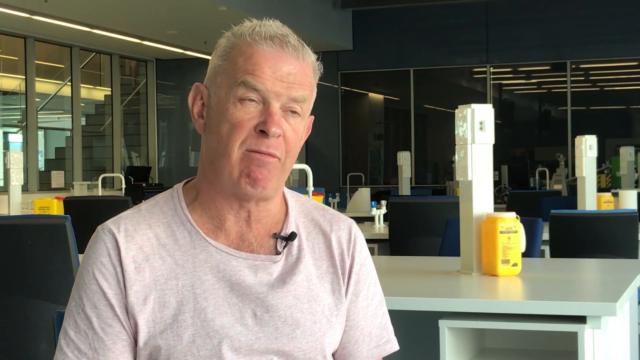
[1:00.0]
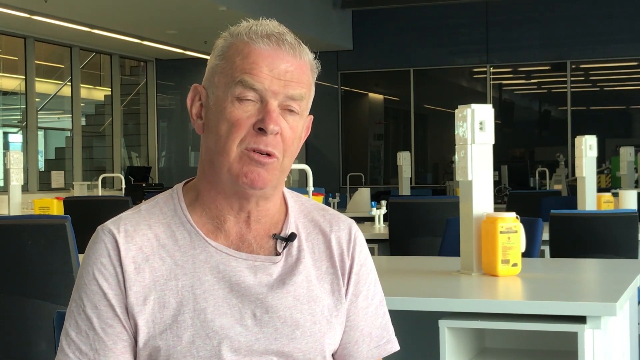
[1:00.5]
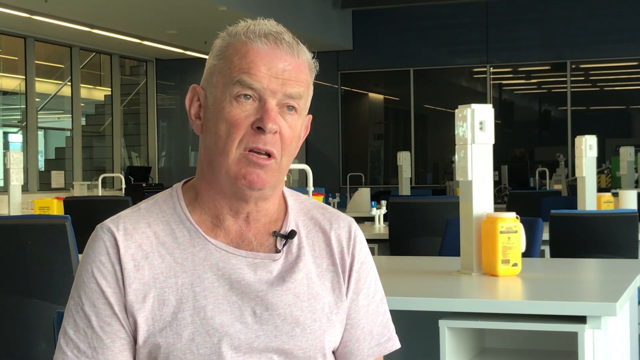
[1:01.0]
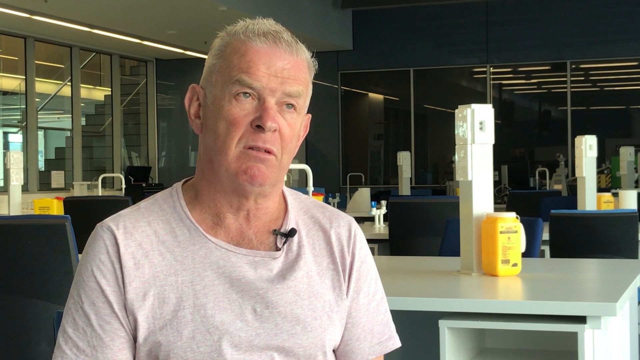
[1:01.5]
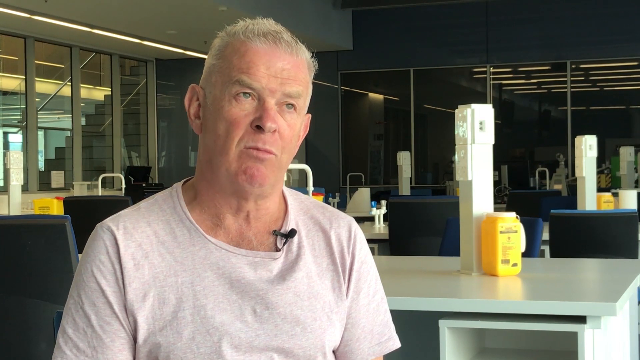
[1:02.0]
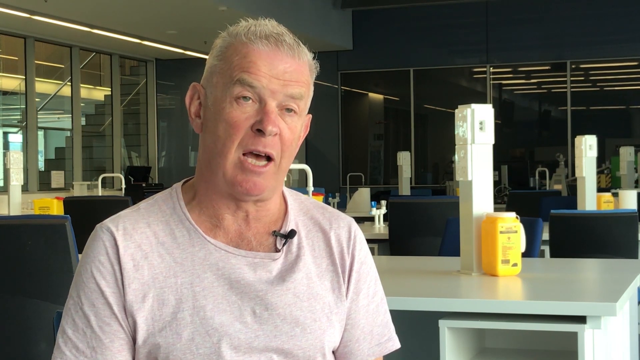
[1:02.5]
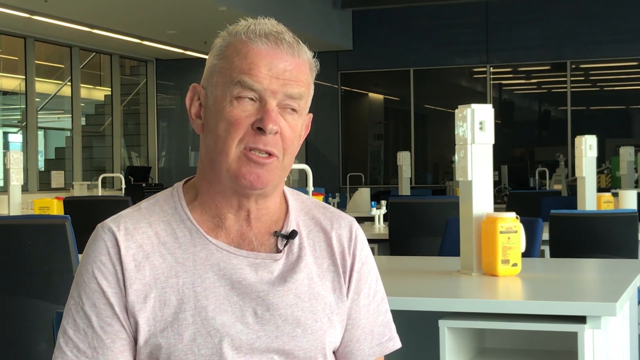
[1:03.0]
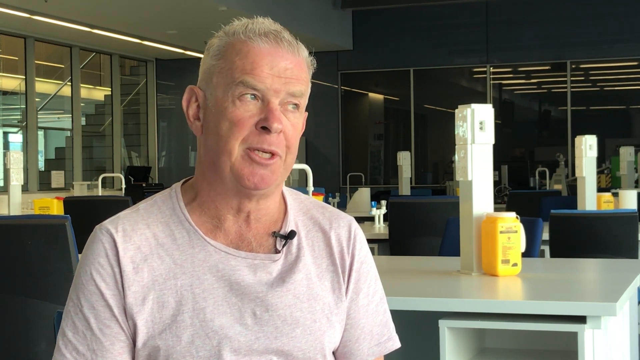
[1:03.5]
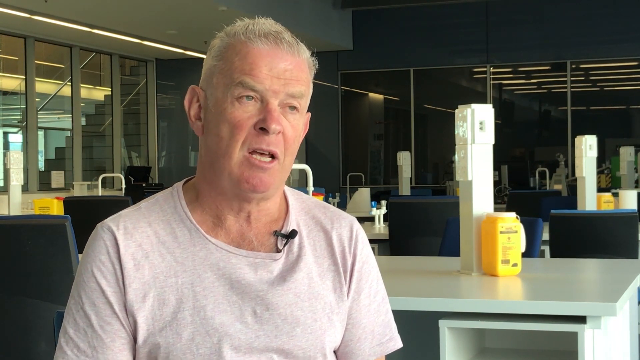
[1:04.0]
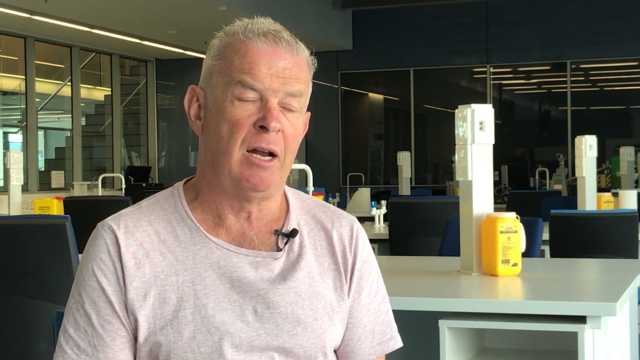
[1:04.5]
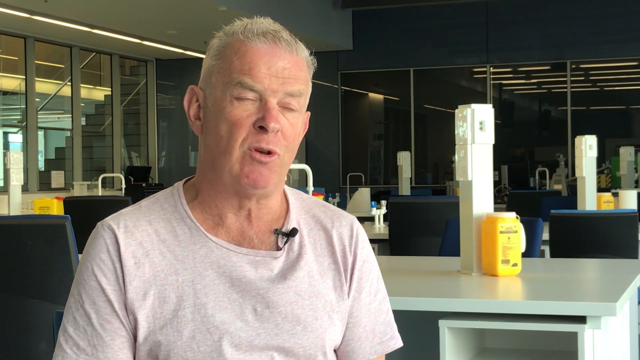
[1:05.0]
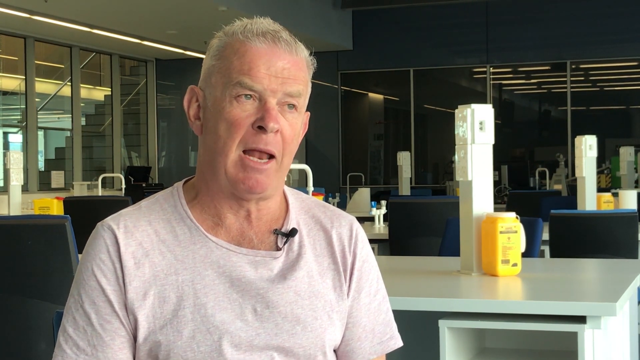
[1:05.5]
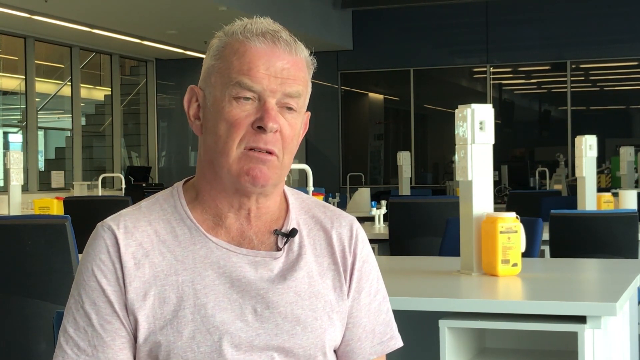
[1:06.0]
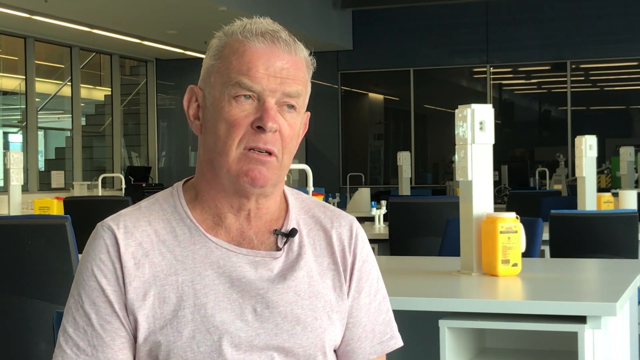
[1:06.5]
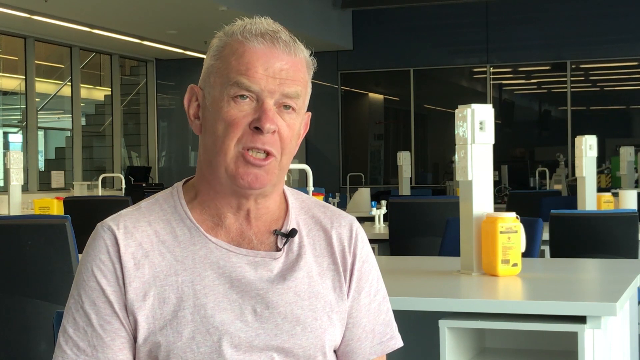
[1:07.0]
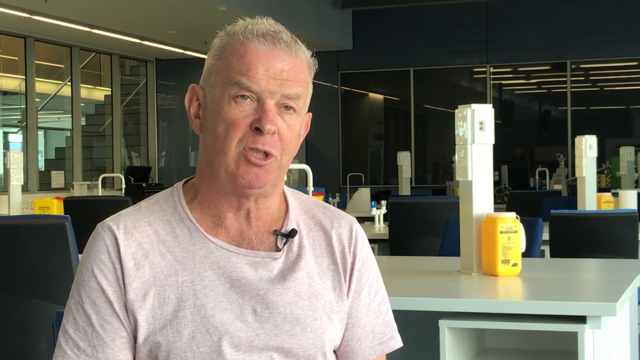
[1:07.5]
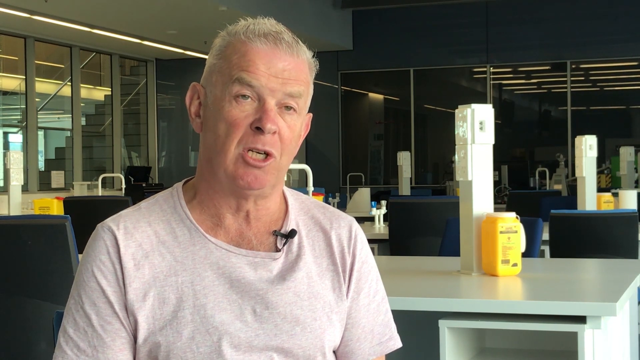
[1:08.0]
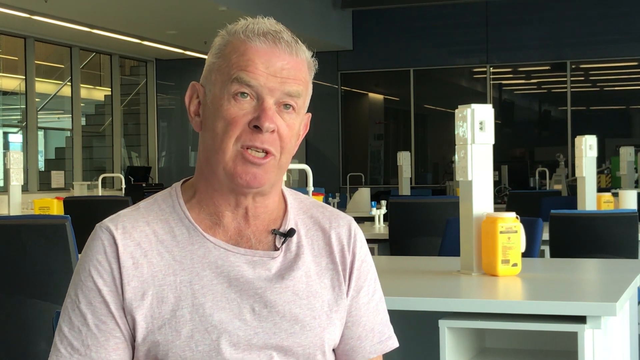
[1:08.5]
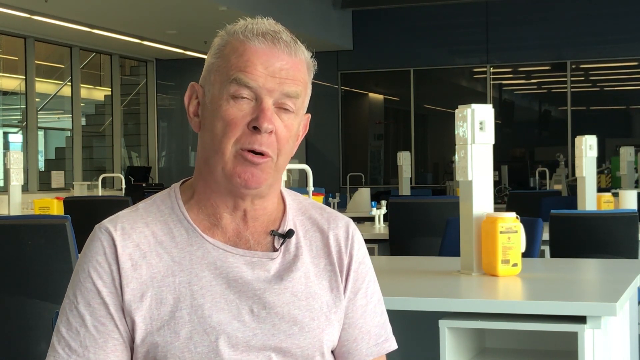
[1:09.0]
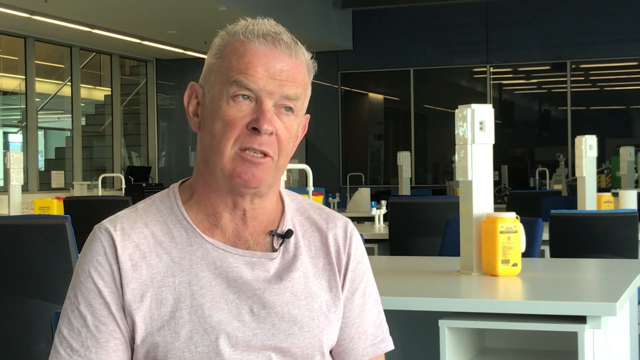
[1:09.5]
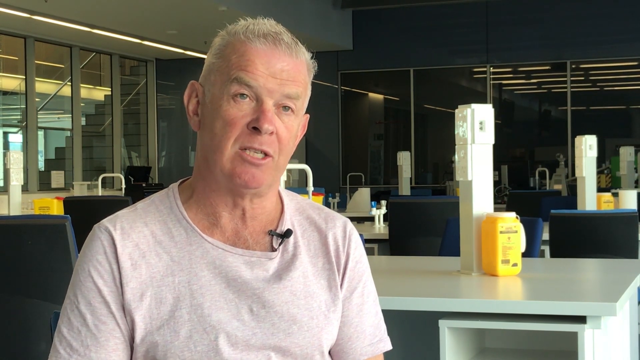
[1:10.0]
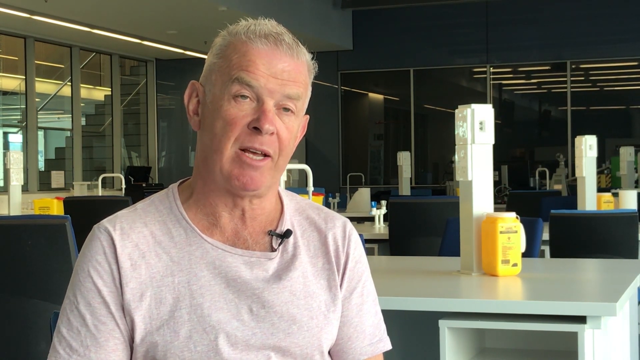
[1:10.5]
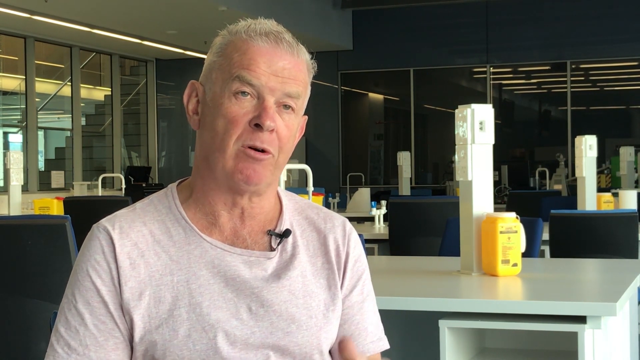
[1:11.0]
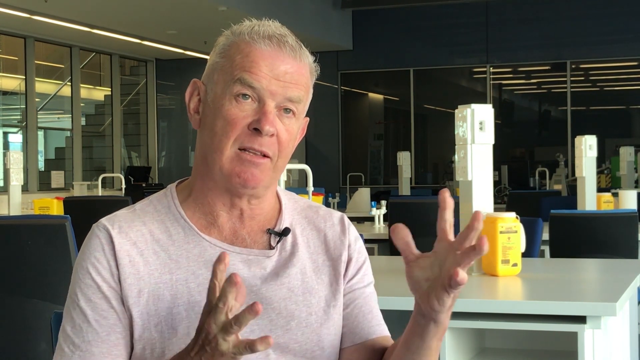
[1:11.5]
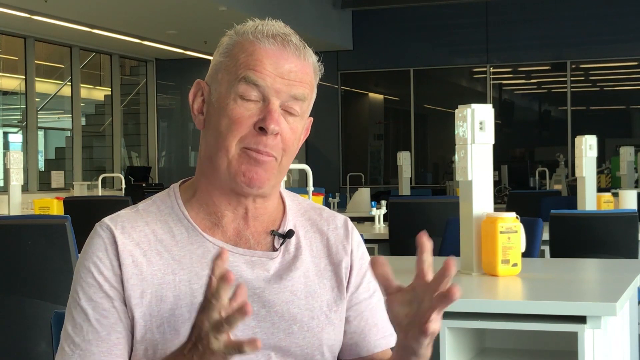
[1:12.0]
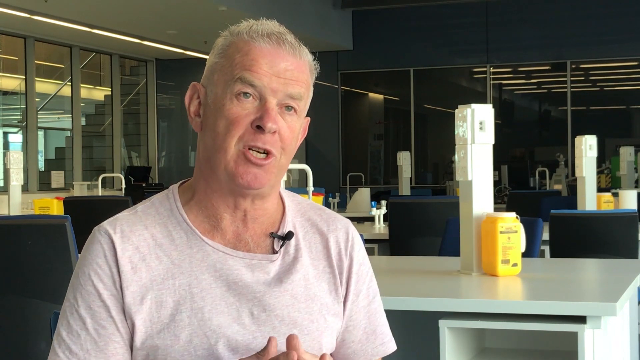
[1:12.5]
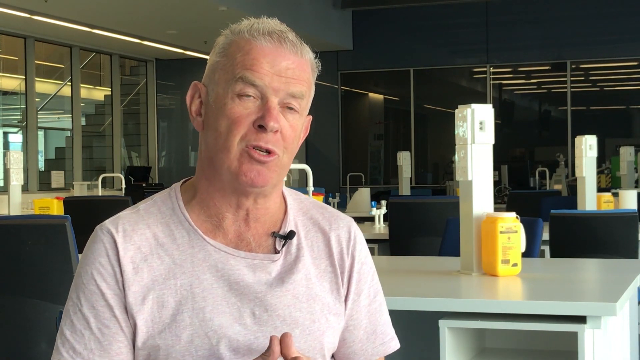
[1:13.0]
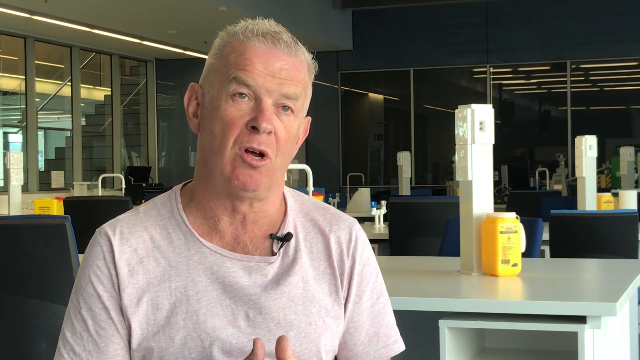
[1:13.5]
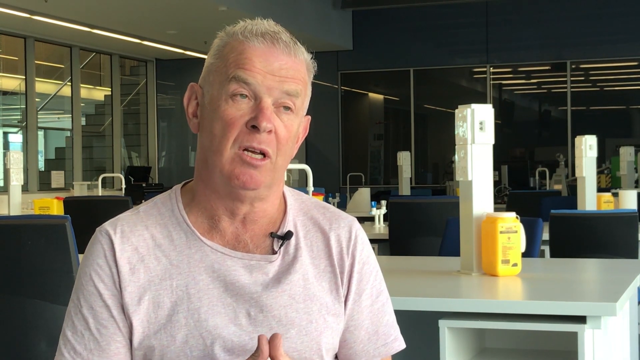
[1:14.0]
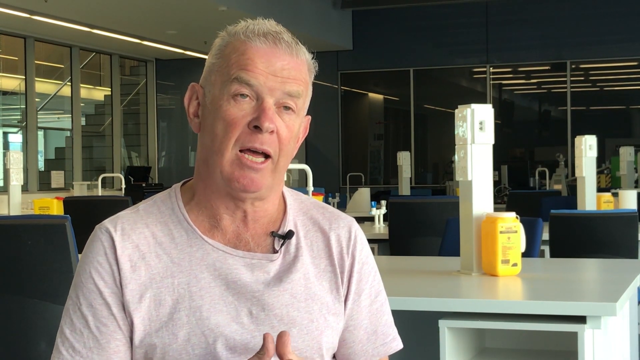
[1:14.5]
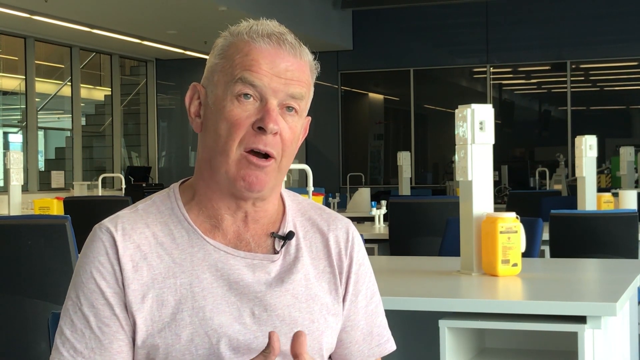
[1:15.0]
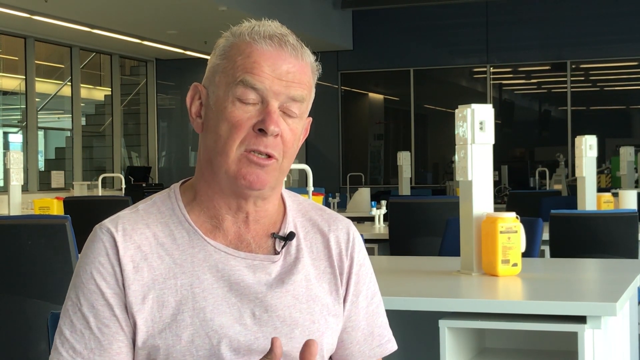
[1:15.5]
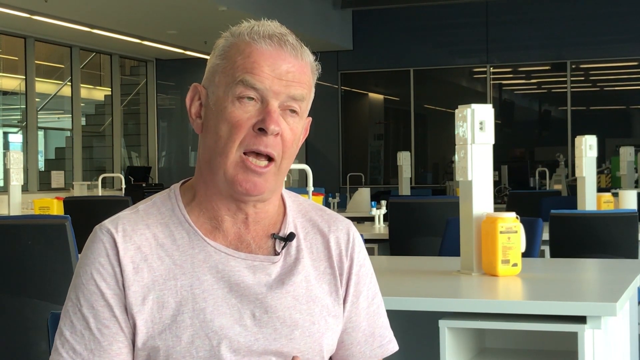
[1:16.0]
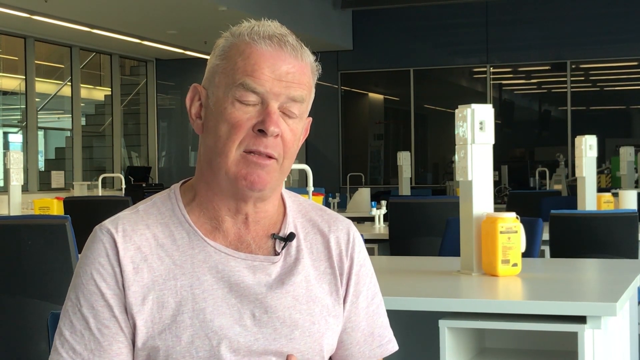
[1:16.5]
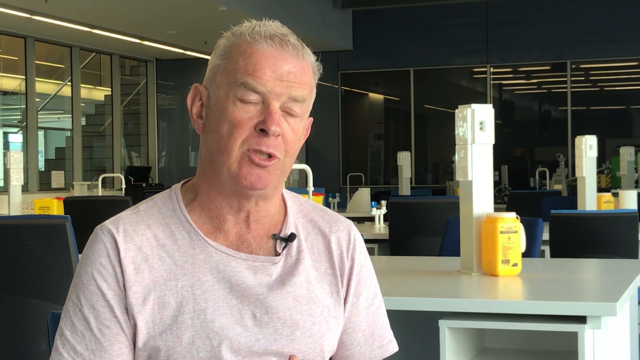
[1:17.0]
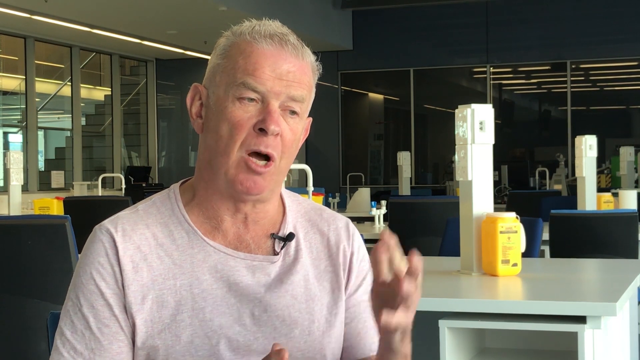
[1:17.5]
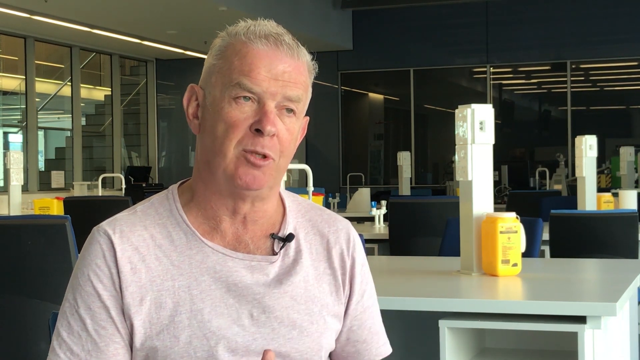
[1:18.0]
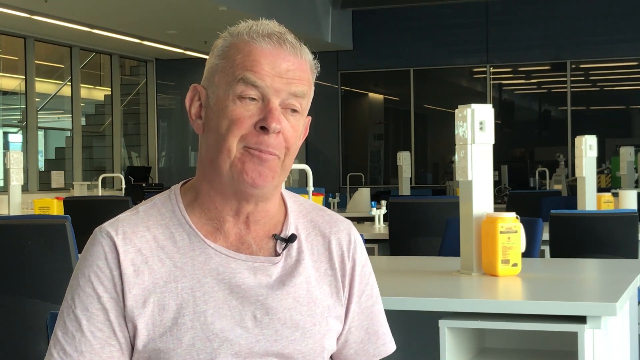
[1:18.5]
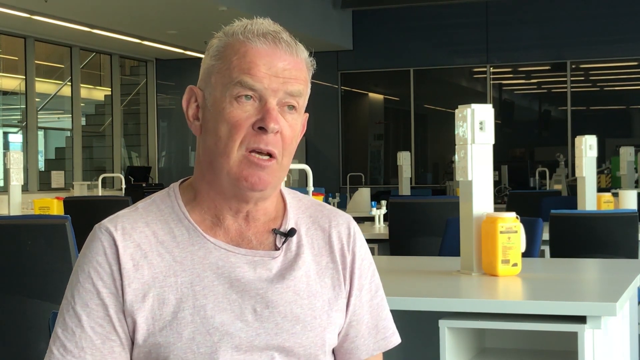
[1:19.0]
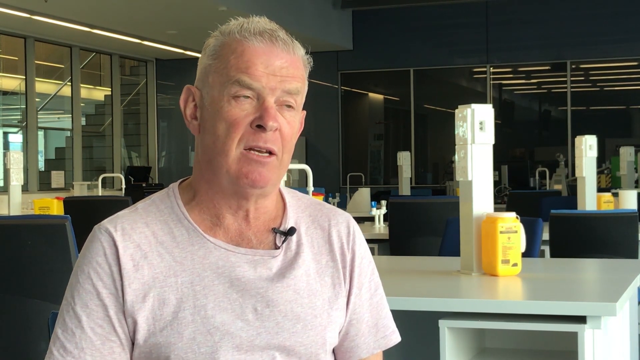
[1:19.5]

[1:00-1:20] An old man, visible from his chest upwards, gives some kind of interview. He wears a t-shirt with a crew neck style collar and a black lapel microphone pointed towards the top right corner of the screen. He is sitting in some kind of indoor lab with multiple windows for walls, and over his left shoulder staircases are visible on the other side of the wall. He talks towards the microphone, repeatedly looking upwards and towards the viewer's right as he seems to think about his words. He raises both hands together with the palms facing each other and fingers splayed out to emphasize a point, then puts his palms together and sort of makes a small clapping motion, until he raises his left hand to emphasize something he says.